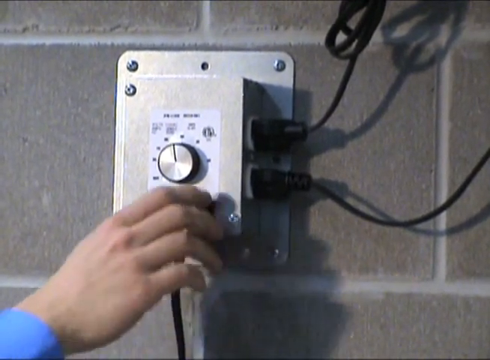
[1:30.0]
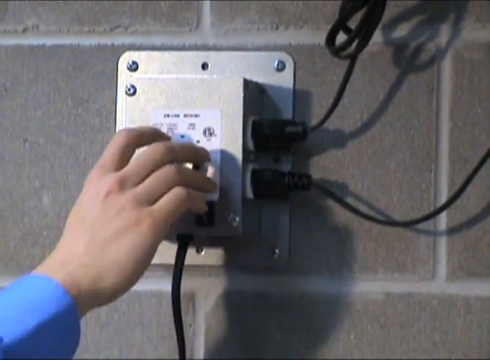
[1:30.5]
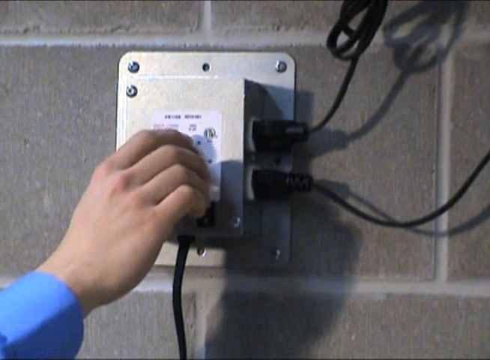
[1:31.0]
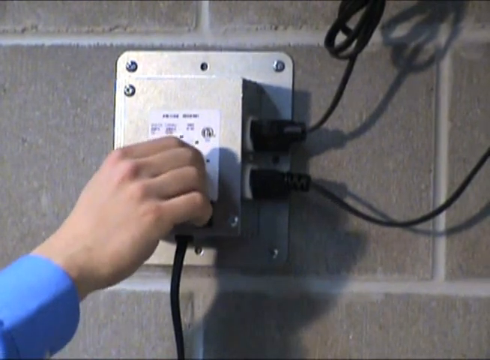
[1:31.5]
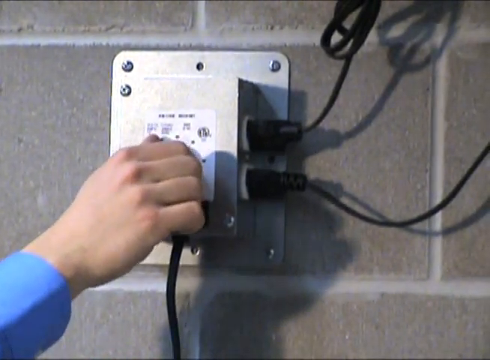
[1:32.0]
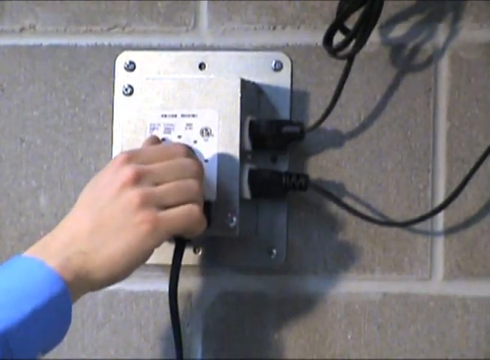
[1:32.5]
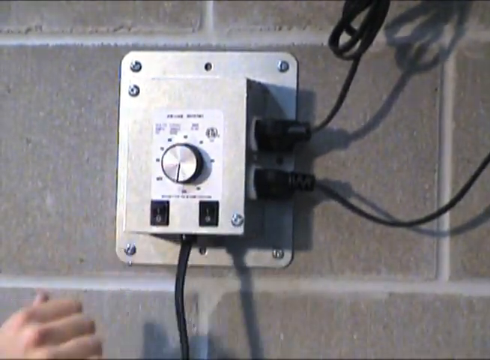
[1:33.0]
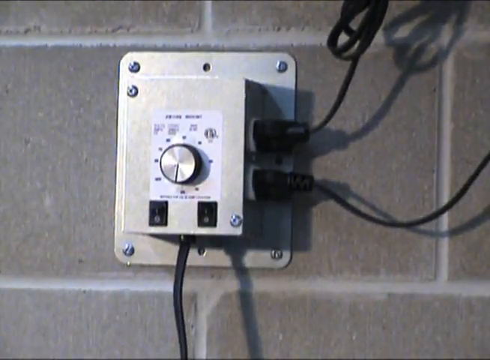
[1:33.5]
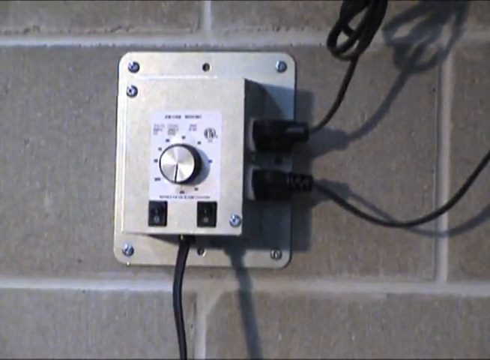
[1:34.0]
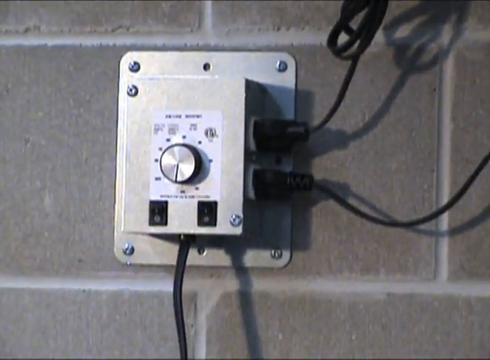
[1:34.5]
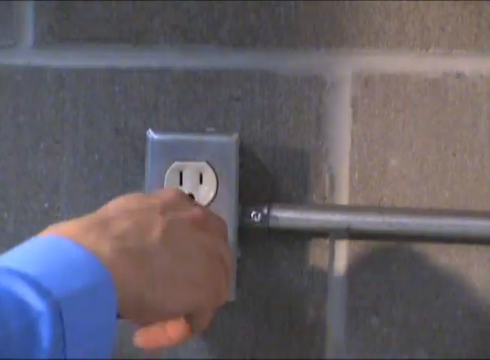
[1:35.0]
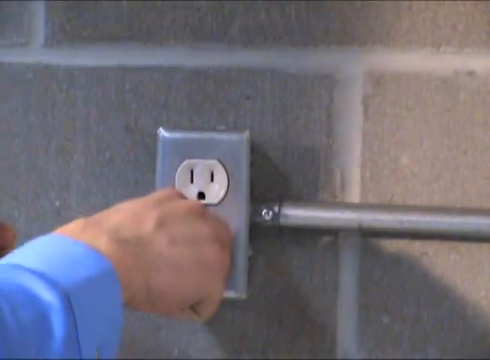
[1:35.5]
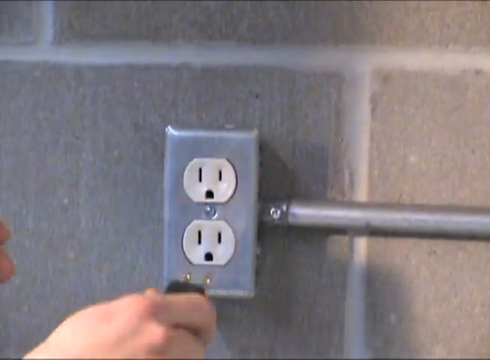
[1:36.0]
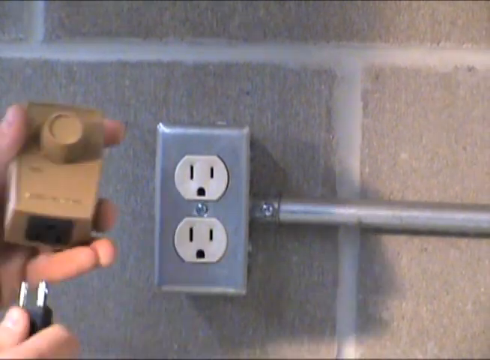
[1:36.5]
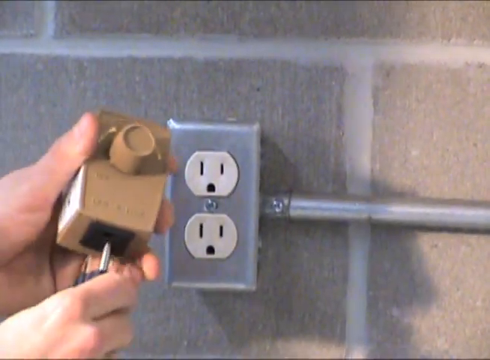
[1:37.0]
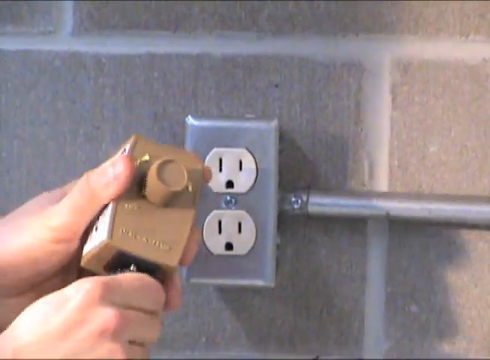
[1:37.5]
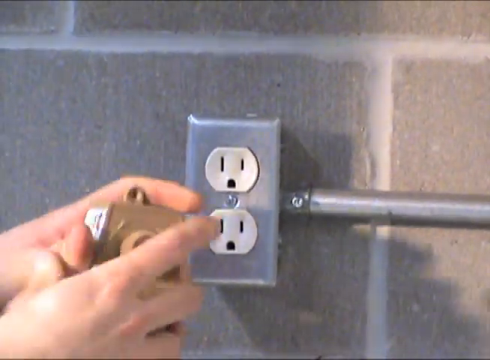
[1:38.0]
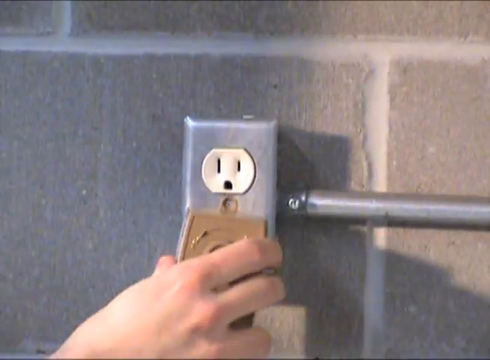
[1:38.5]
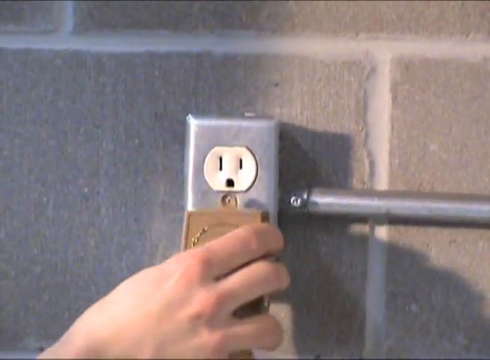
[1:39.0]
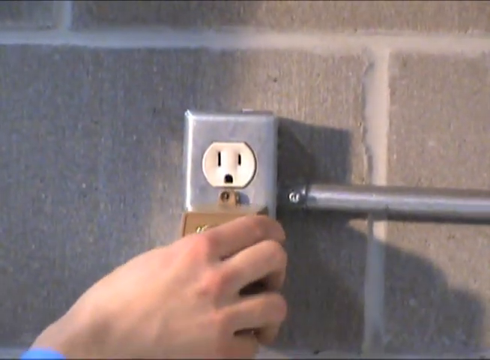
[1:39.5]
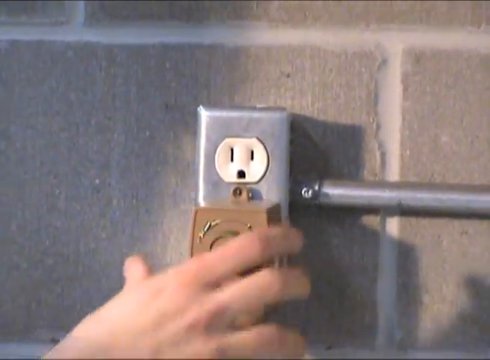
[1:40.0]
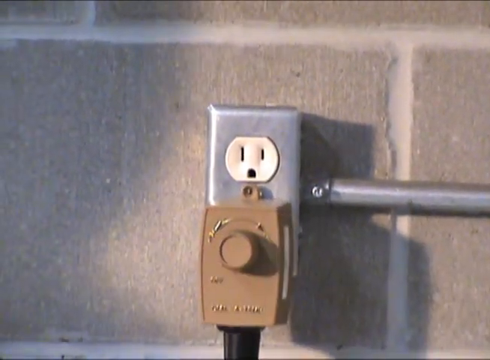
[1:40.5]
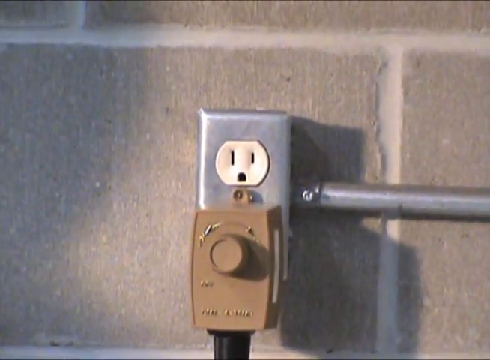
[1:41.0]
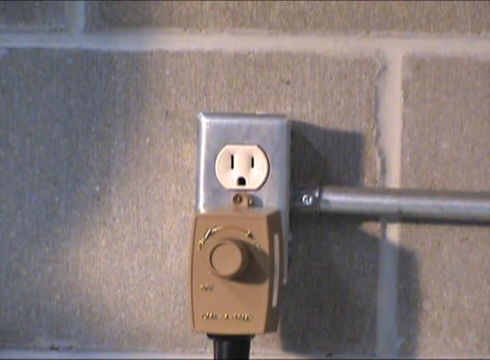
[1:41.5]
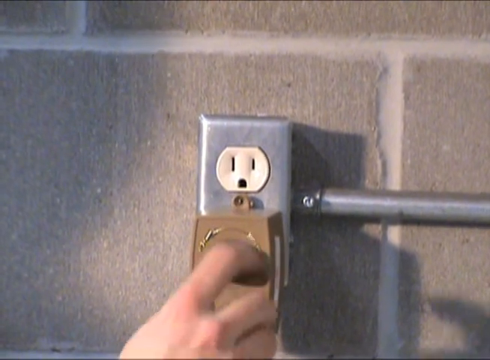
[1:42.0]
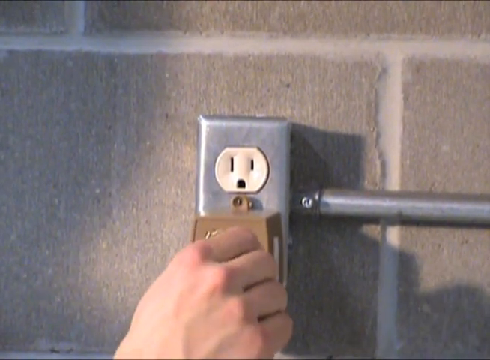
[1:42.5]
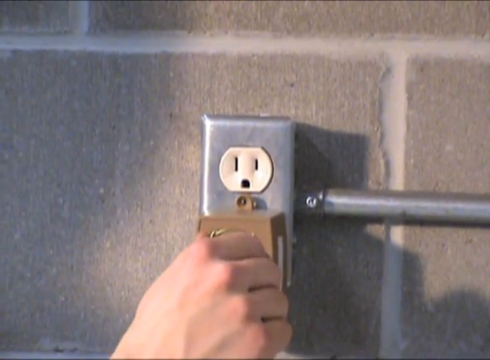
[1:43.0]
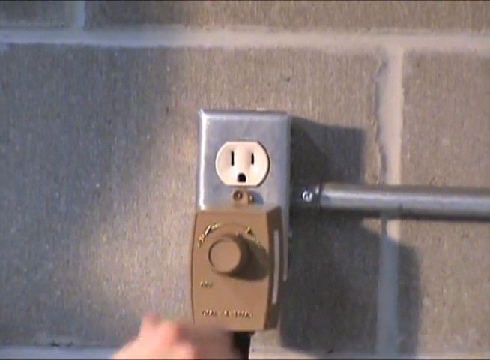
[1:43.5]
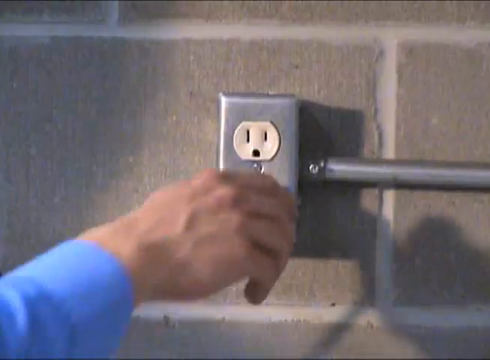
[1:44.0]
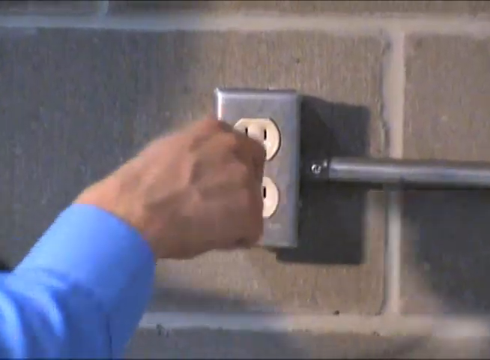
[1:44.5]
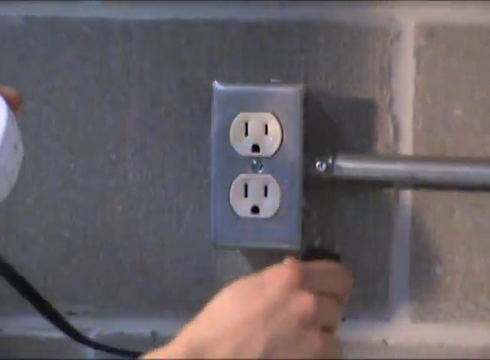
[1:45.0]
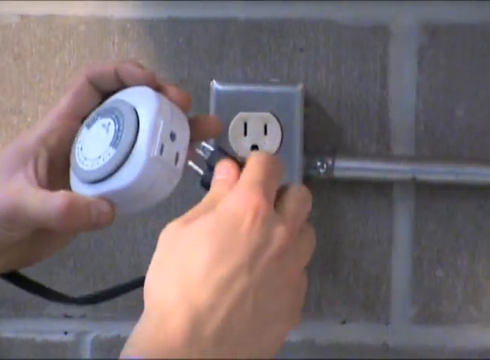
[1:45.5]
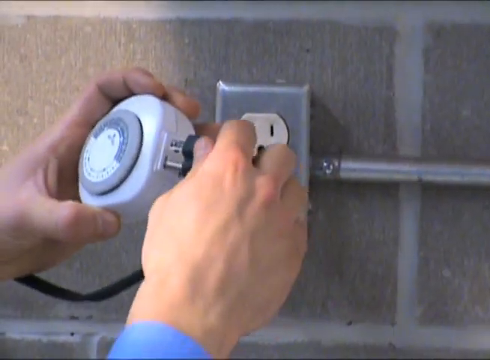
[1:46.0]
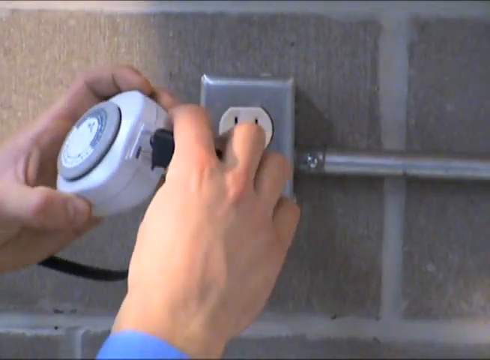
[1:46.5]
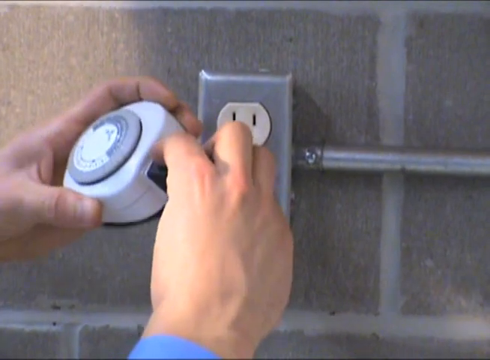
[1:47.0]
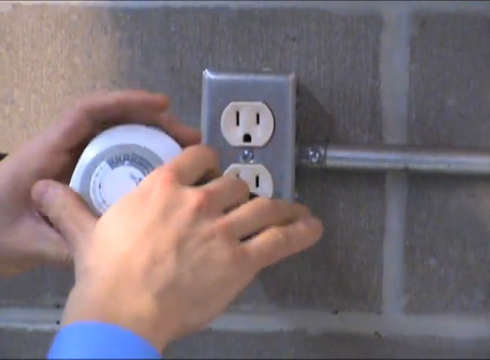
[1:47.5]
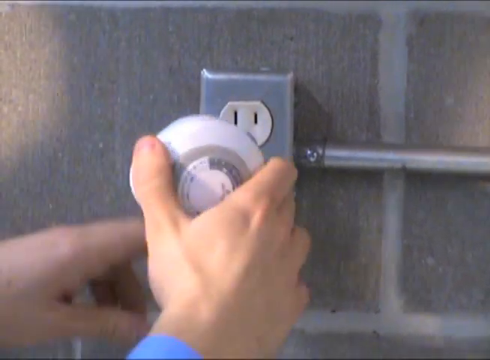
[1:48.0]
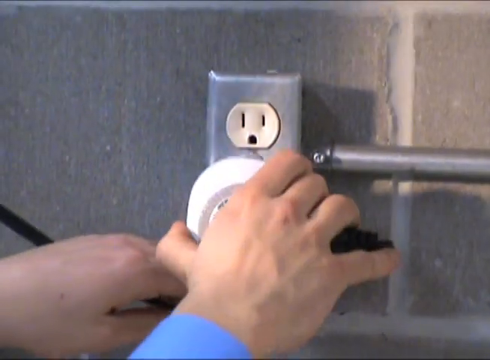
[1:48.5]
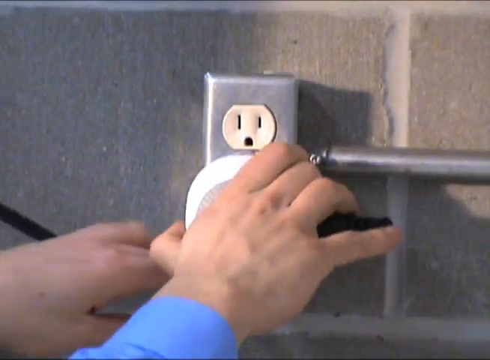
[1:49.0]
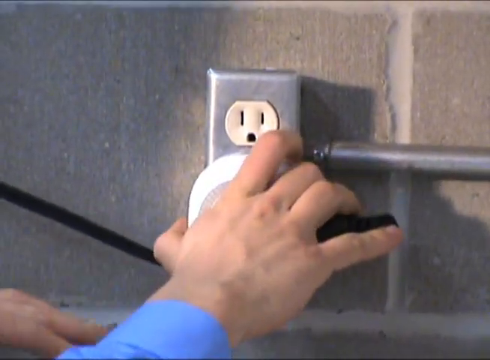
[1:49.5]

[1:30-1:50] A metal plate is screwed into a breeze block wall, holding a metal control unit for a basement fan. It has a rheostat with a dial to adjust the speed of the fans and two black switches below it for turning the left-hand and right-hand fans on and off. Two black cables lead from sockets on the right of the control unit up to the fan unit, which is out of the frame above. A black metal power cable comes from the bottom of the control unit and heads down out of the picture. A man's hand is visible adjusting the rheostat. The view changes to the power socket where the fan is plugged in. The man unplugs the fan from the socket and plugs it into a brown electrical device with a rheostat on it. He then unplugs that and plugs in another electrical item instead, a circular device with a dial that looks like a timer, apparently for automating turning the fan on and off.